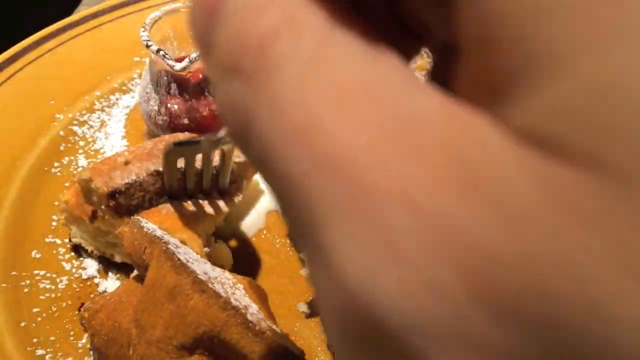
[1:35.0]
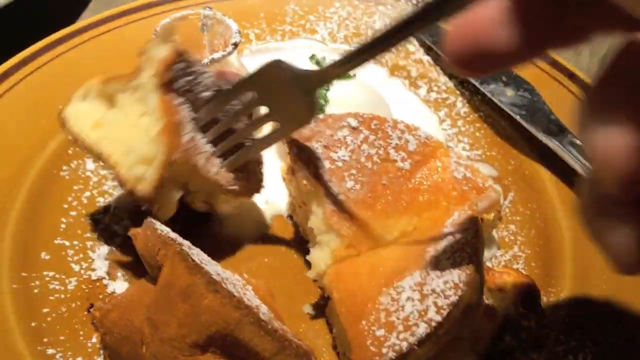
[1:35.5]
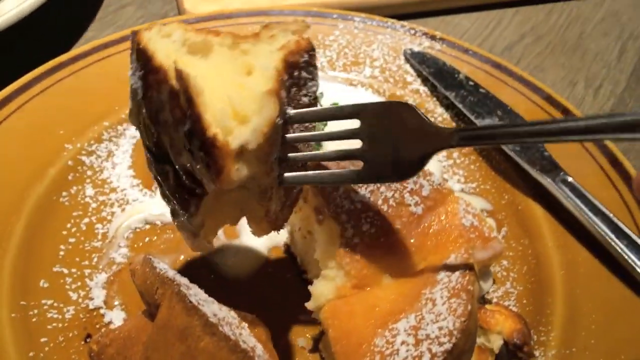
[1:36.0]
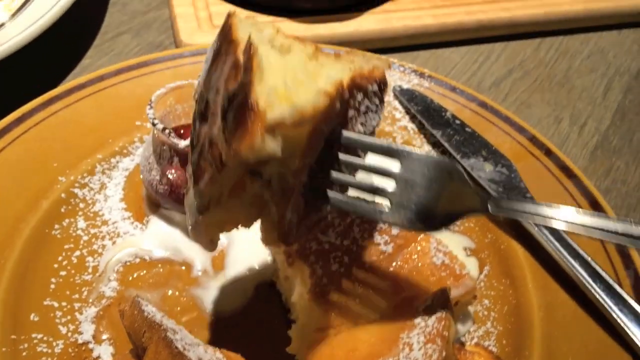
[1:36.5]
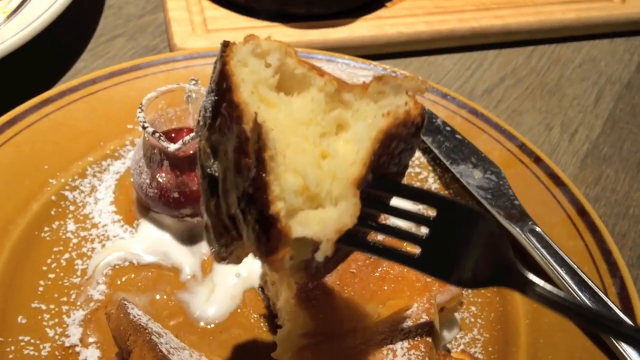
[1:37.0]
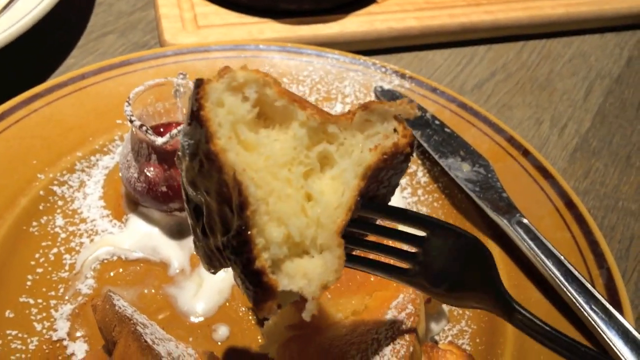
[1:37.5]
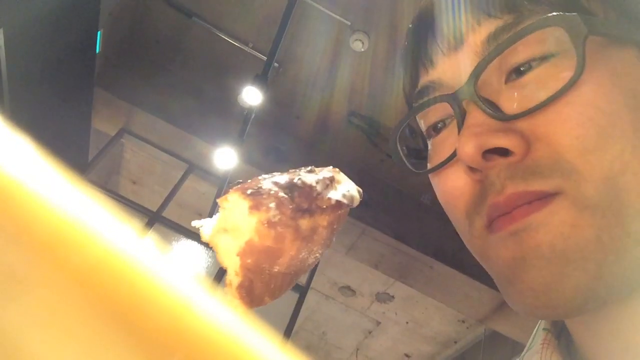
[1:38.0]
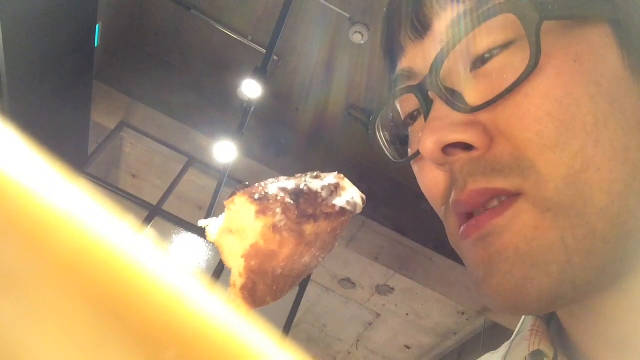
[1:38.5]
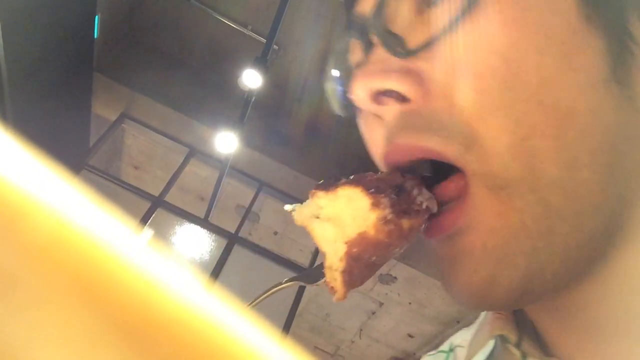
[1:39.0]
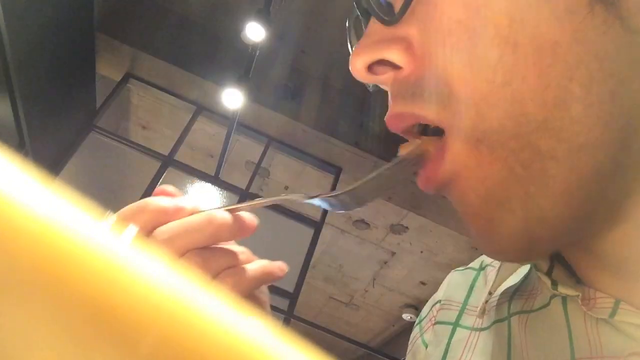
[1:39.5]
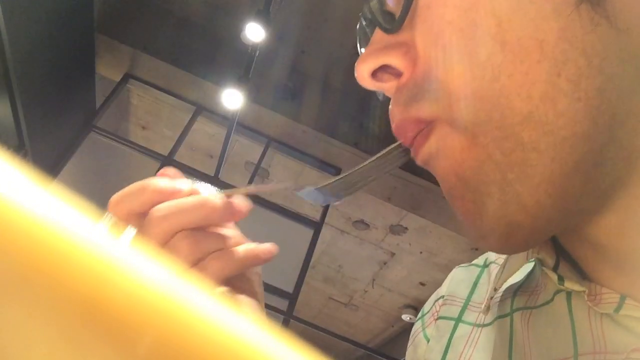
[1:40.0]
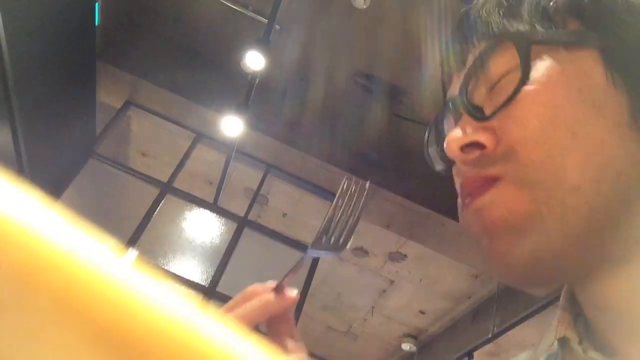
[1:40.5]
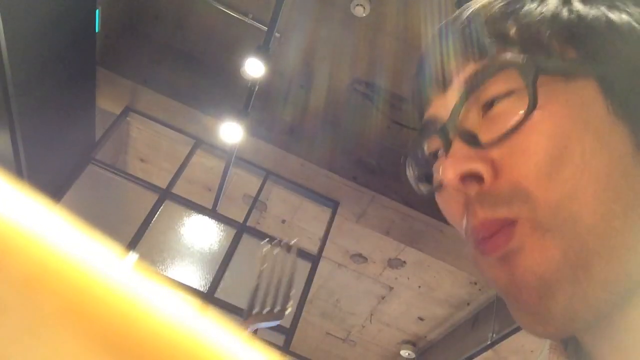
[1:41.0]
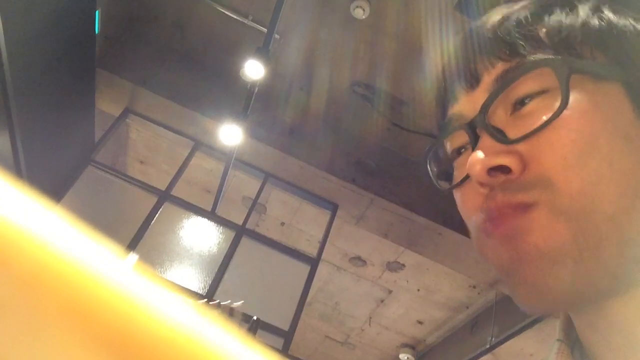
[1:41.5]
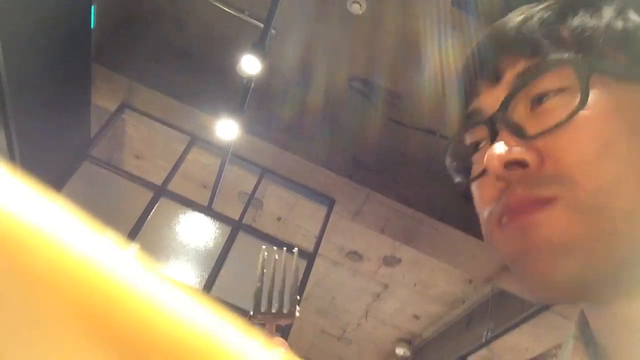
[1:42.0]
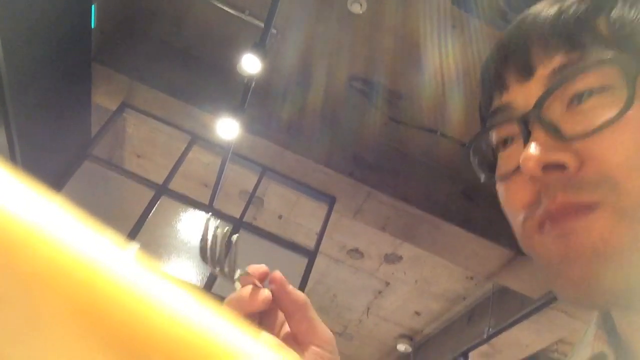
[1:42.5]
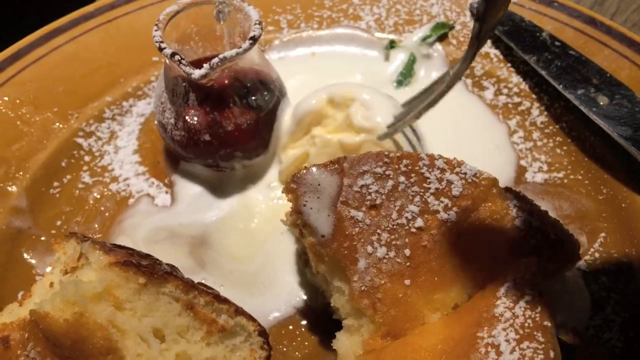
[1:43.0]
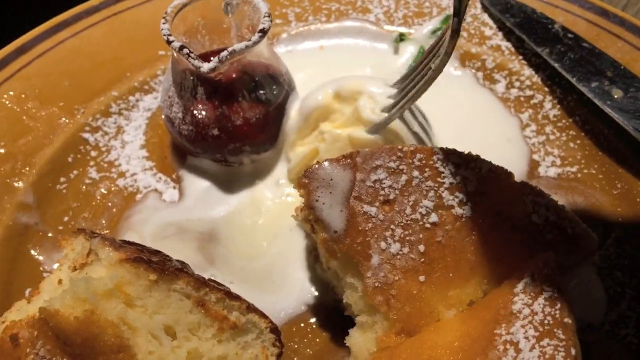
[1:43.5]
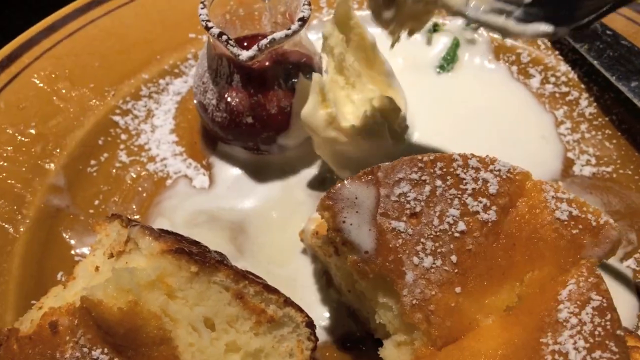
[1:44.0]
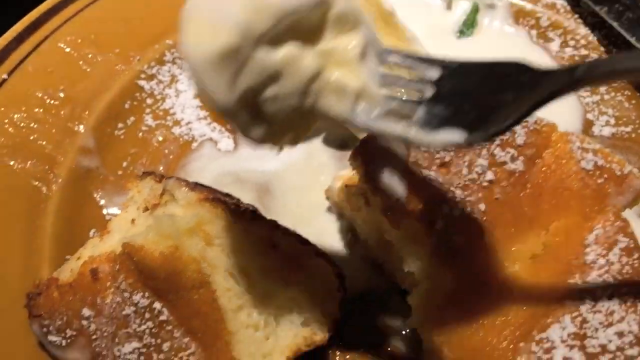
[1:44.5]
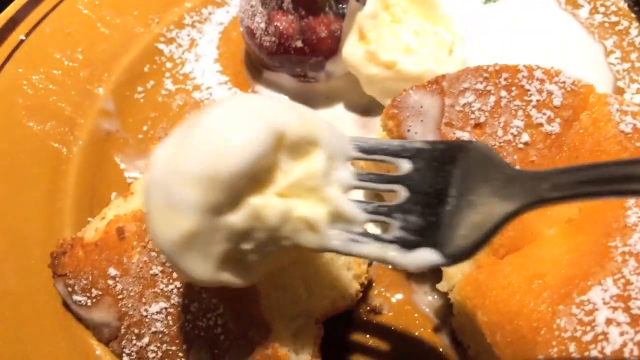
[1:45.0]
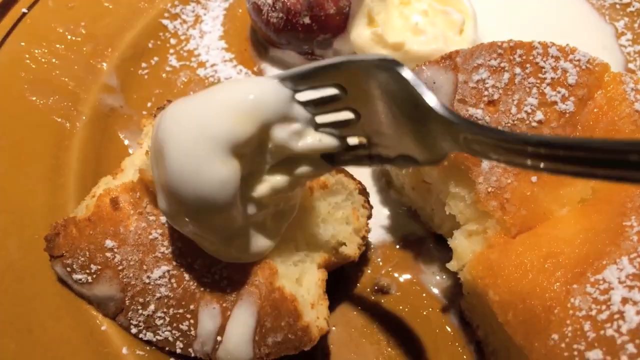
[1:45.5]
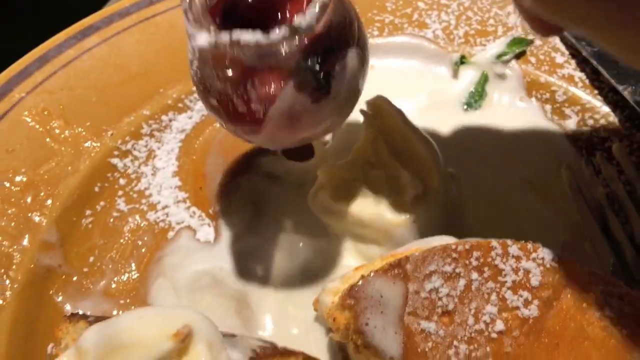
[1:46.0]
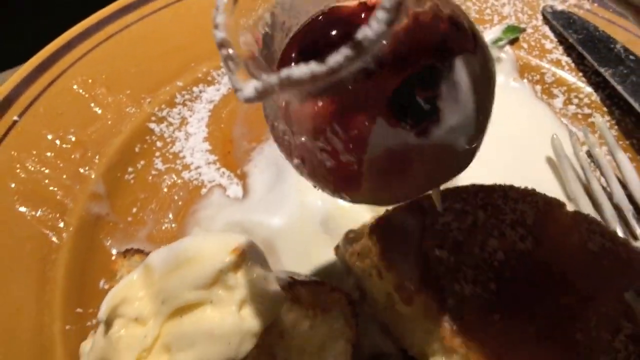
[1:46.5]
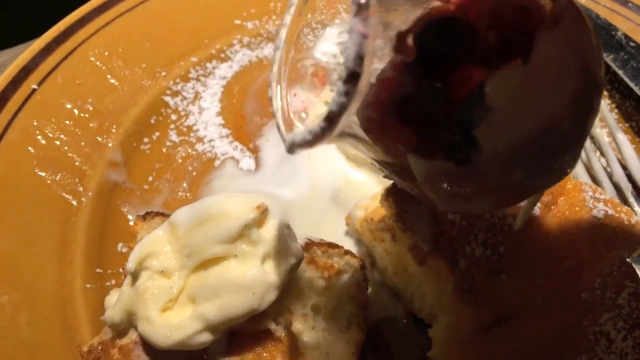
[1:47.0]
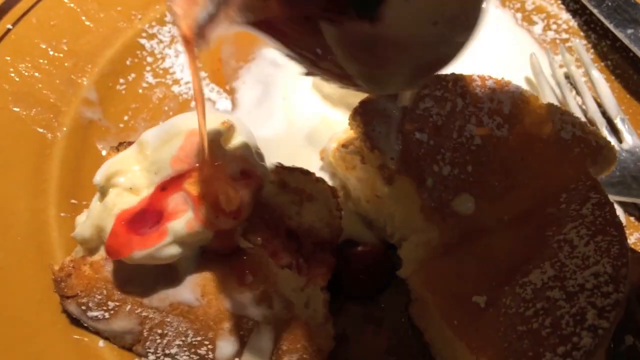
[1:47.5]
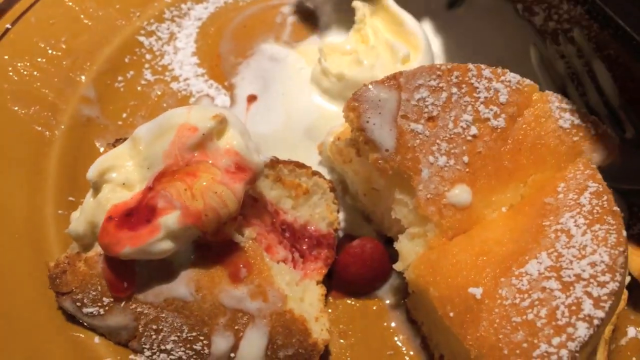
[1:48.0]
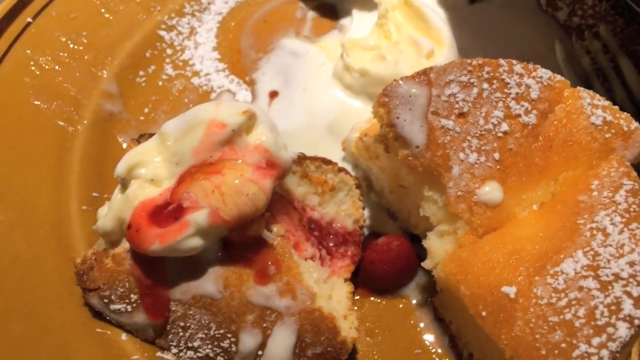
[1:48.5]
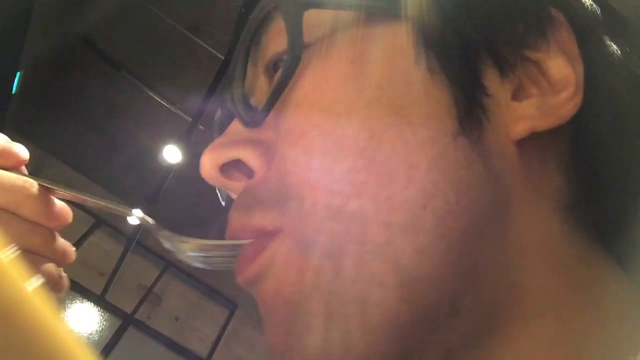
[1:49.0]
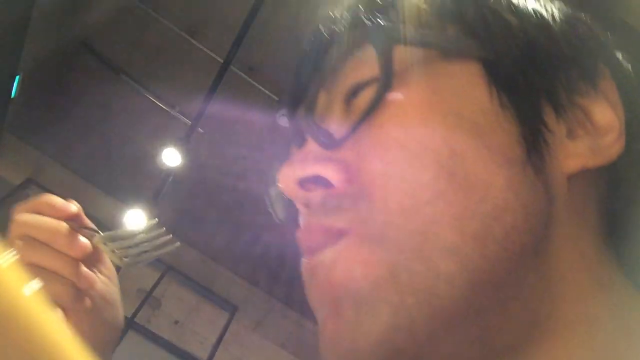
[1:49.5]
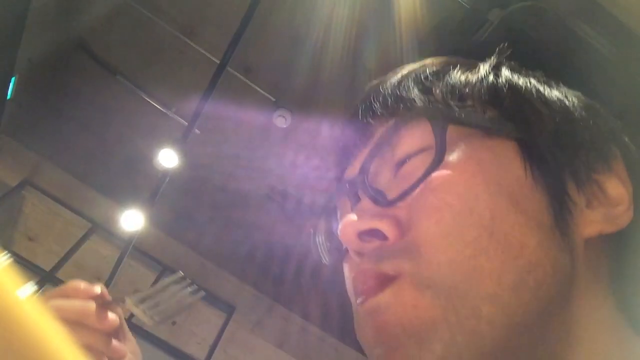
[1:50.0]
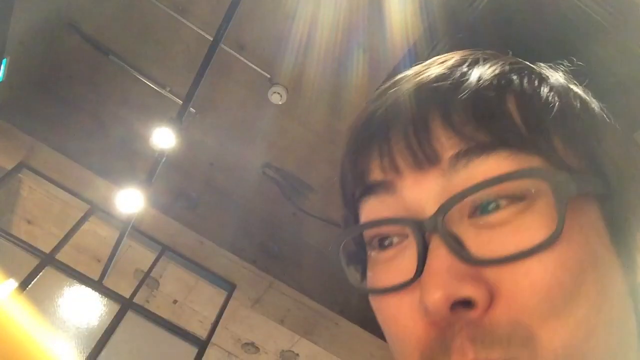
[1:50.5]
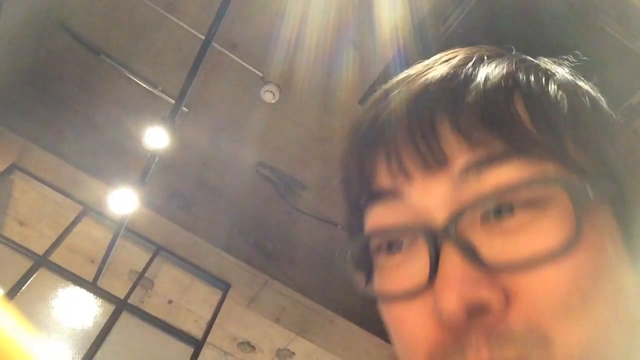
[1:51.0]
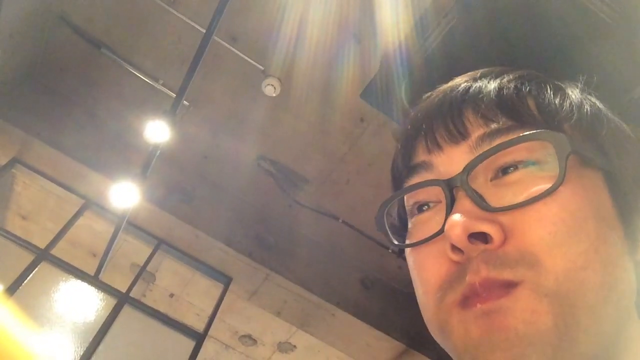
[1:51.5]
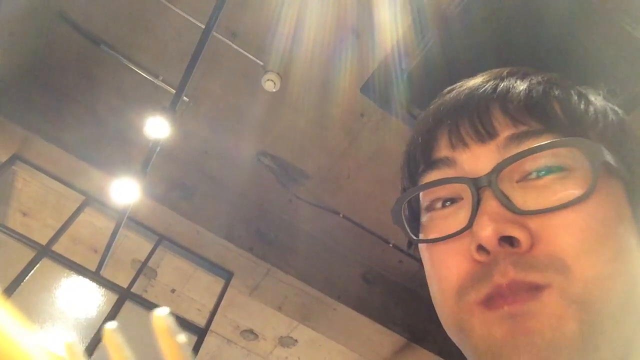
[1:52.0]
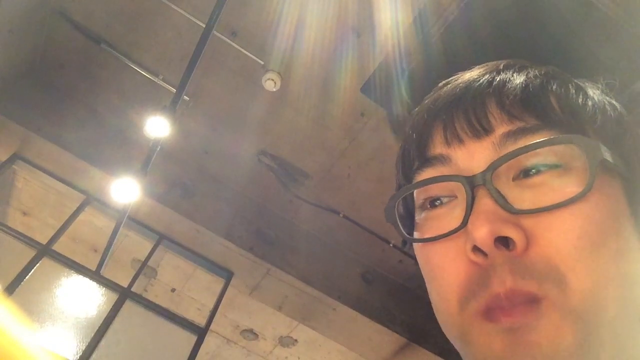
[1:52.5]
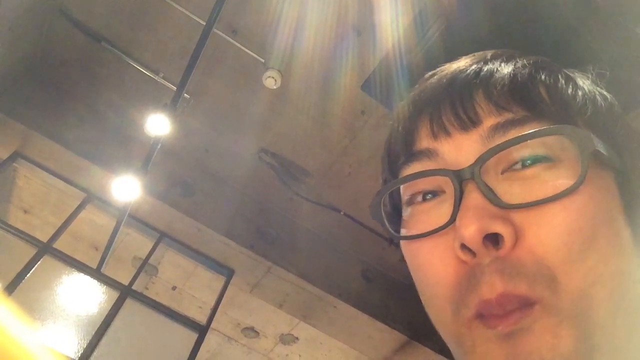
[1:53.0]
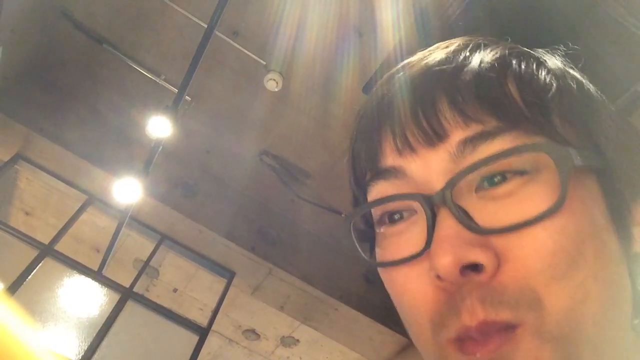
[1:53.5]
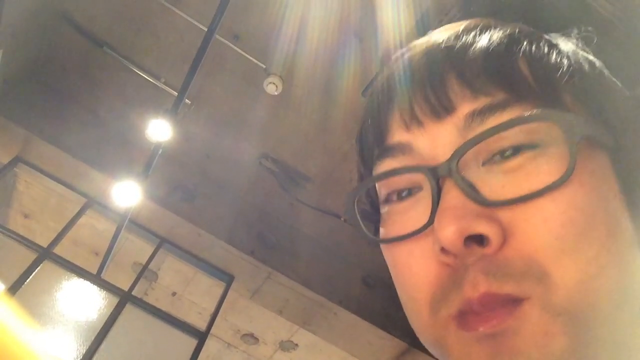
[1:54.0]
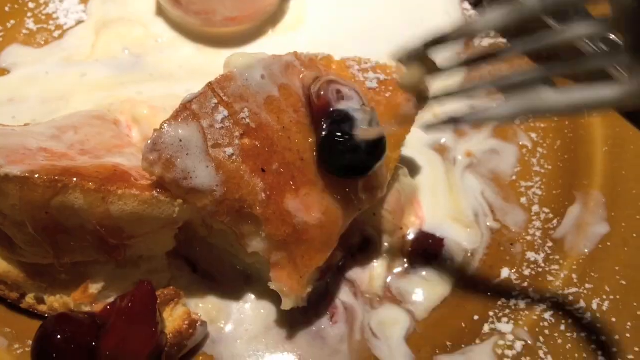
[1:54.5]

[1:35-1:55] The man takes a full forkful of the pastry dessert, which is very buttery and looks like a vanilla cake. The scene changes to selfie mode as he puts the dessert in his mouth; his facial expressions show he is really enjoying it, and he smiles and nods his head up and down as if saying yes. He then takes his fork into the ice cream, takes a bit, adds it to another forkful of the dessert, and the video returns to selfie mode as he eats it. Next he takes the fruit or strawberry syrup, which is a light syrup with whole strawberries or cherries inside, and pours some on top of the piece of dessert with the cake and ice cream so it all melts together. He takes that bite, the shot looks like it goes back to selfie mode, and his facial expressions make clear he is really enjoying the dessert.